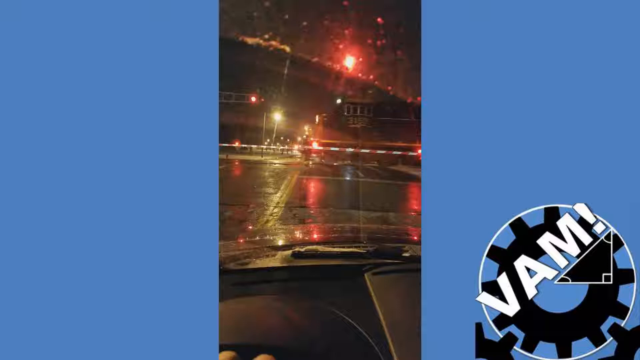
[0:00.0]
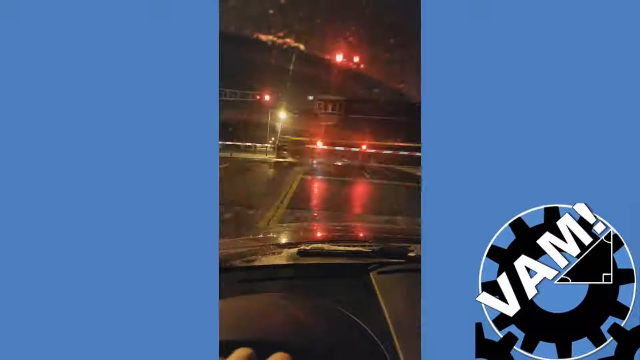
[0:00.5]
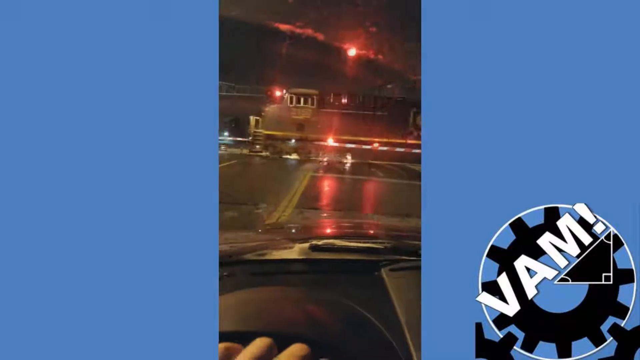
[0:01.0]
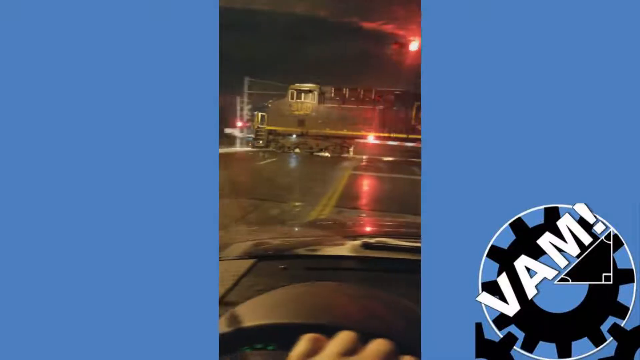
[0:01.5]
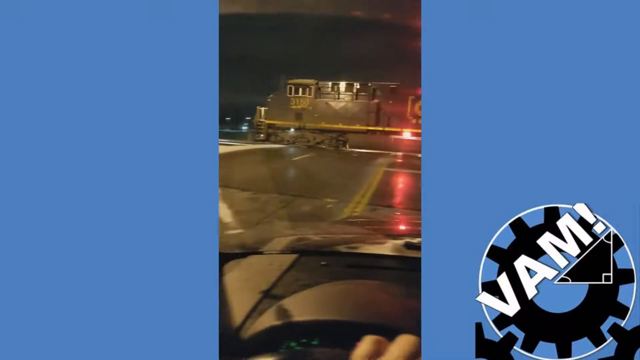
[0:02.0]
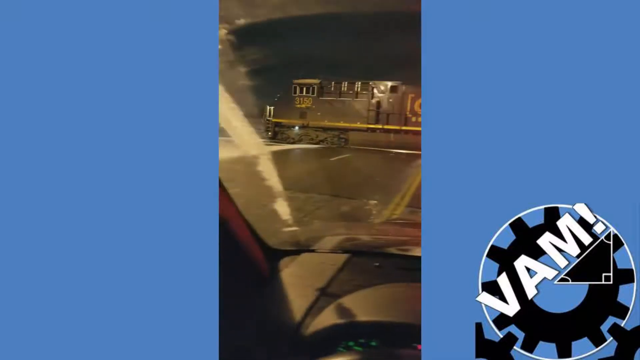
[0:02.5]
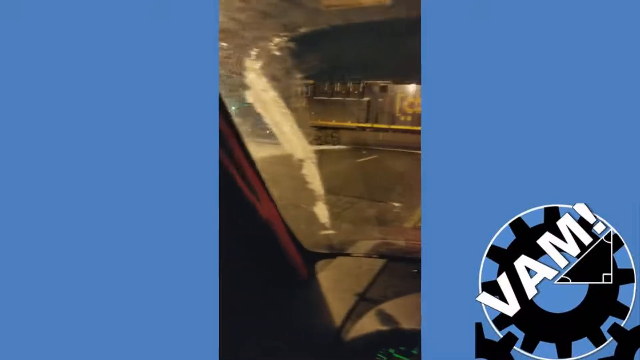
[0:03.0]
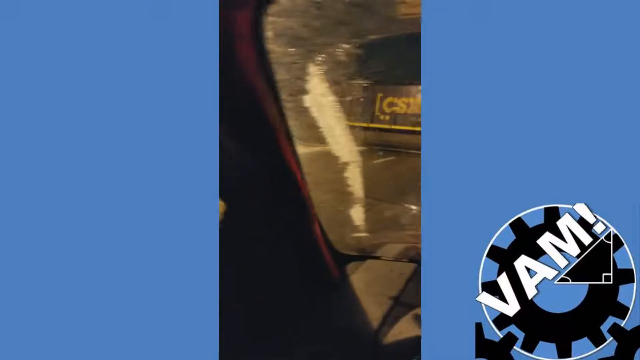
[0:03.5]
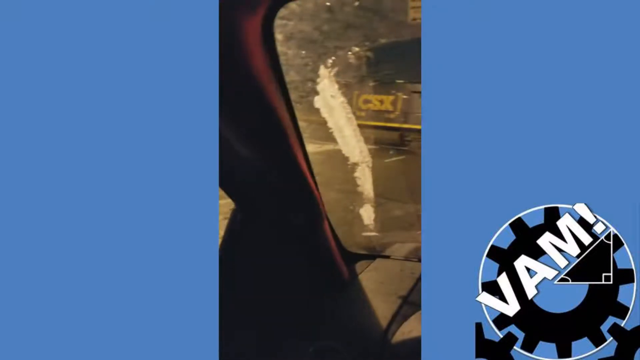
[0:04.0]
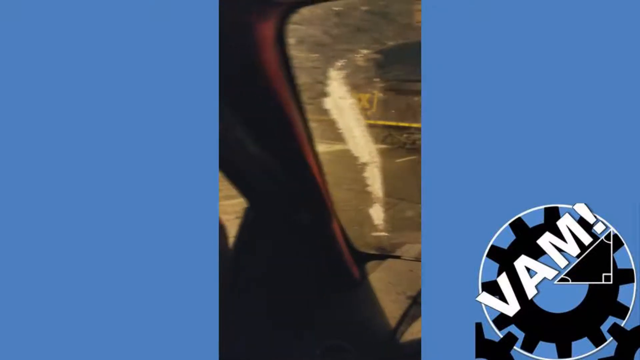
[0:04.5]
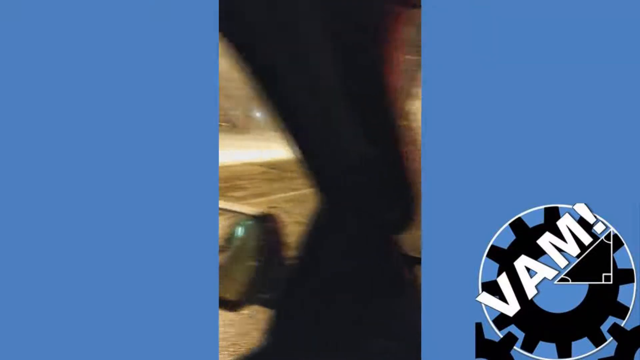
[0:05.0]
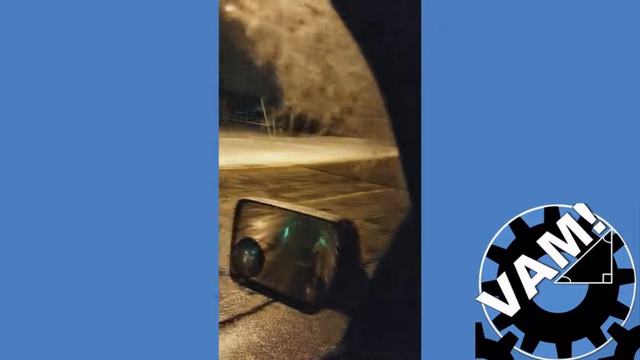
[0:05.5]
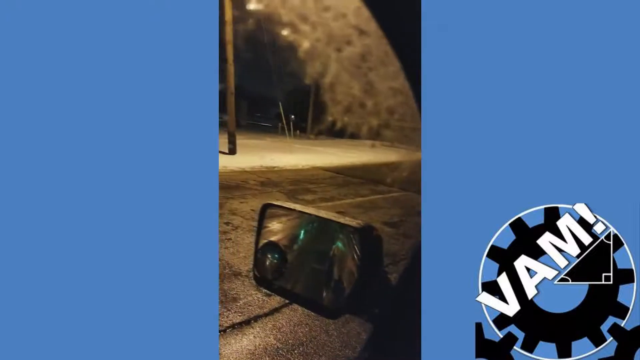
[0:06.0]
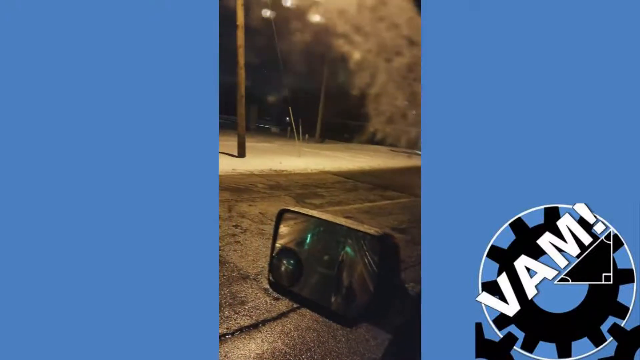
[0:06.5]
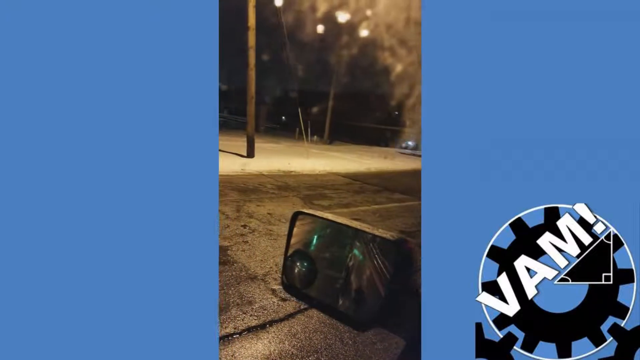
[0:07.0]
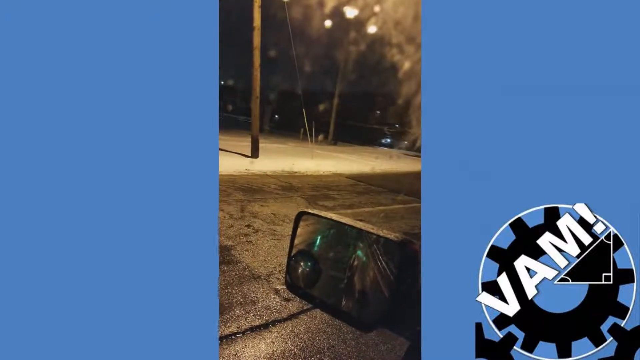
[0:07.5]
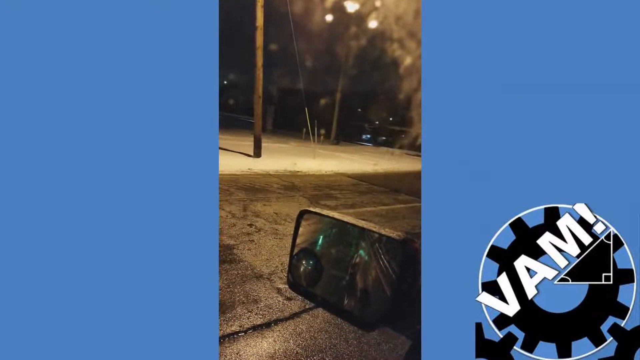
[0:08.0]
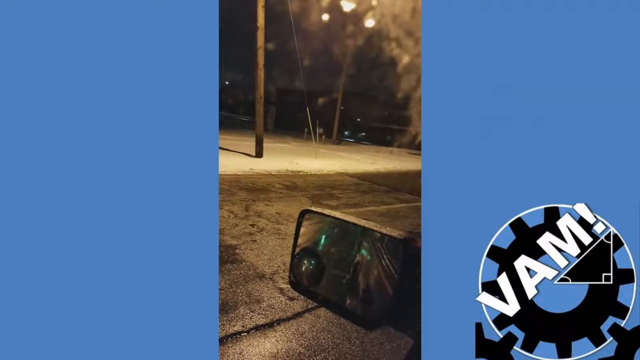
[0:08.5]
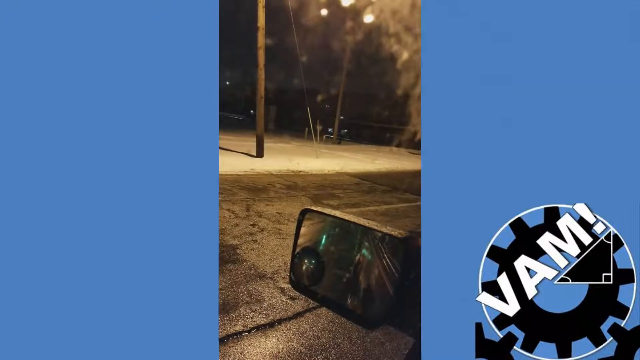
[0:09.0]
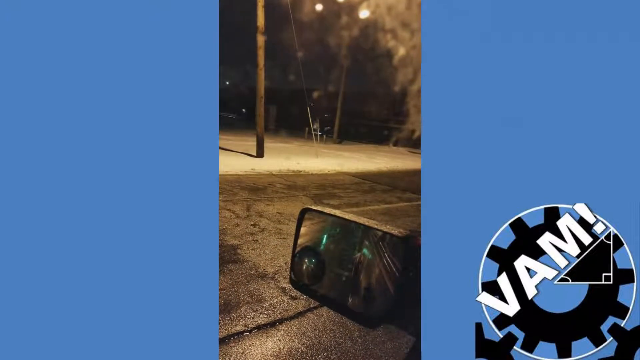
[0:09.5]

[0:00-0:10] A small vertical video appears with two large blue bars on its left and right. Filmed from inside a car, the vertical video shows a train going across a crossing in front of the car, and the shot follows it as it moves past. It is night, and it appears to be wet or snowing, judging by the roads and the windscreen. In the bottom right-hand corner is a large logo with the word "VAM!", showing a gear and a triangle with a right-triangle symbol in it.